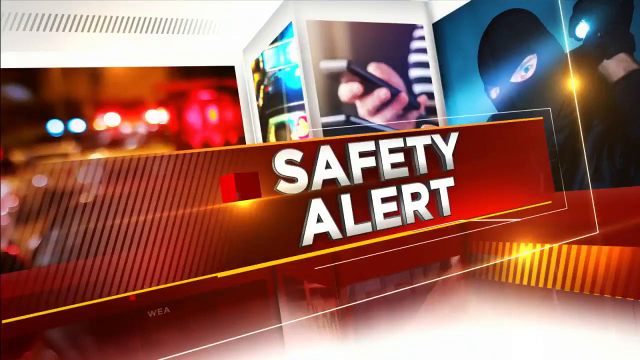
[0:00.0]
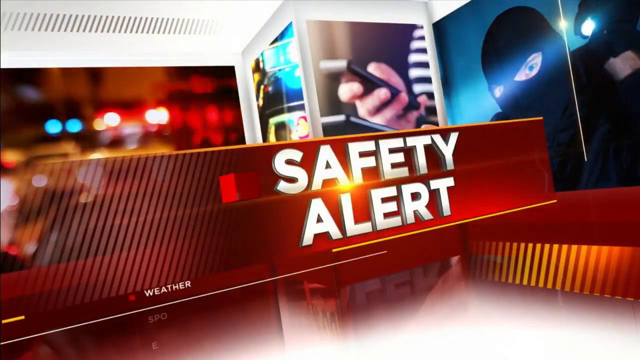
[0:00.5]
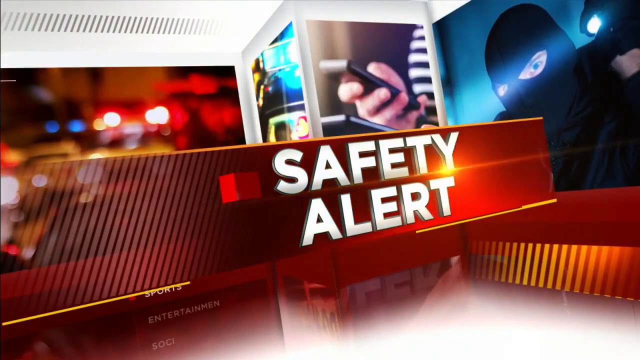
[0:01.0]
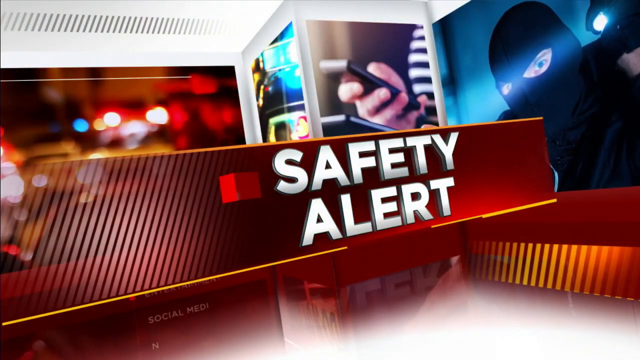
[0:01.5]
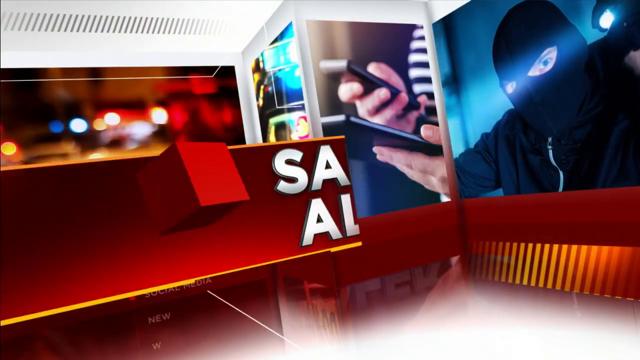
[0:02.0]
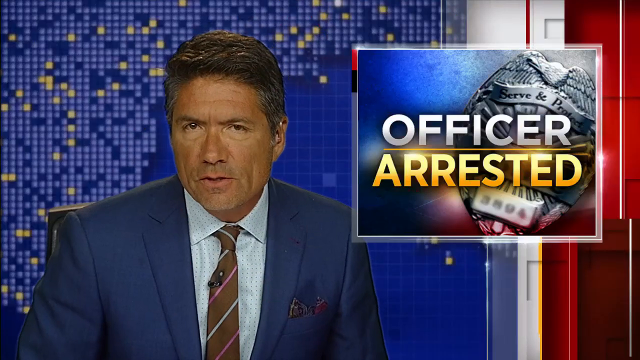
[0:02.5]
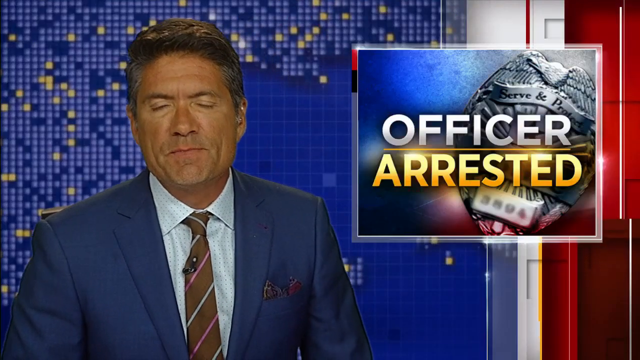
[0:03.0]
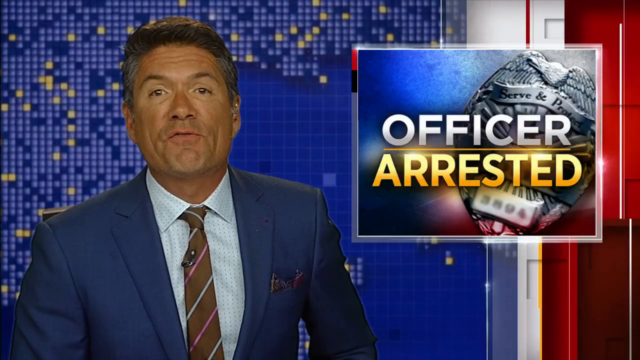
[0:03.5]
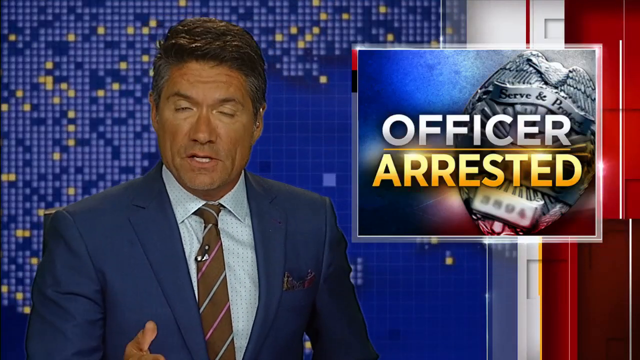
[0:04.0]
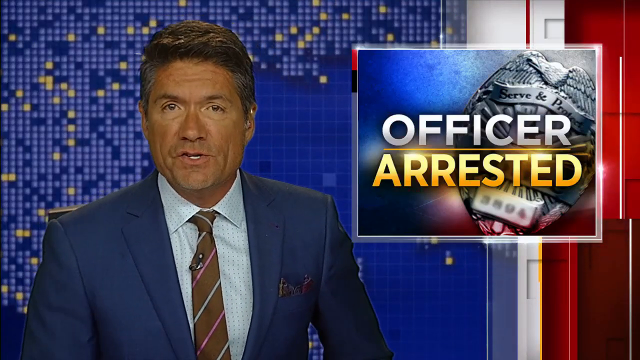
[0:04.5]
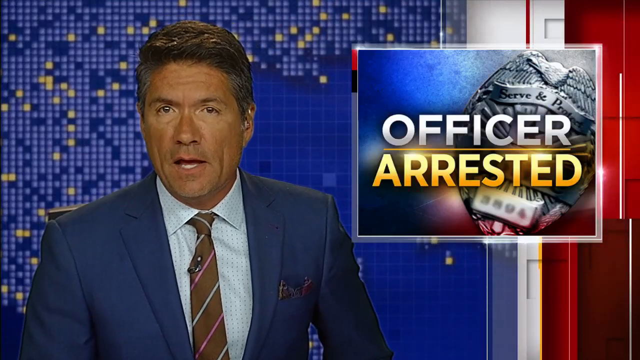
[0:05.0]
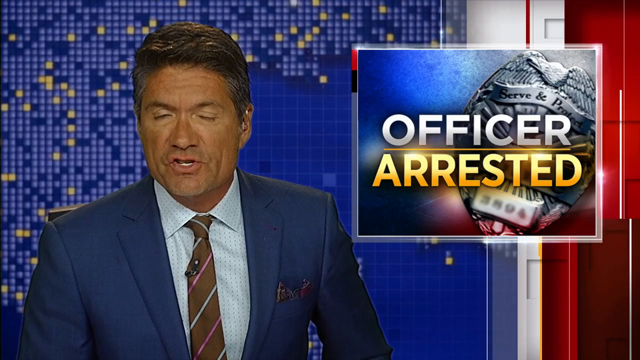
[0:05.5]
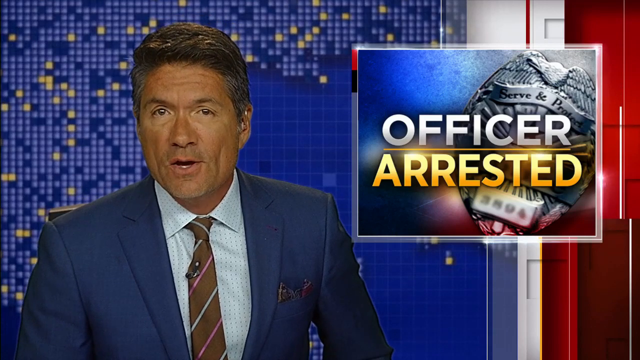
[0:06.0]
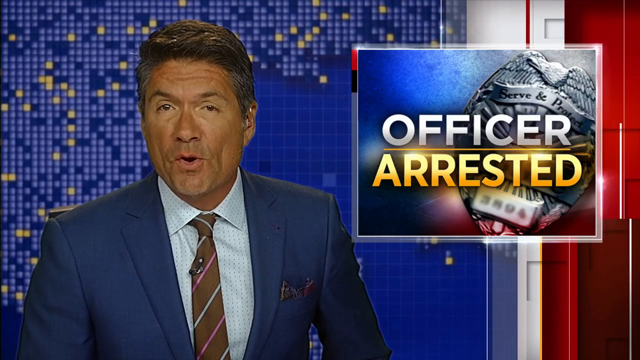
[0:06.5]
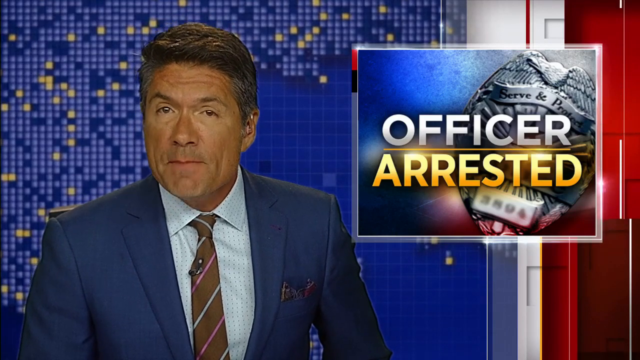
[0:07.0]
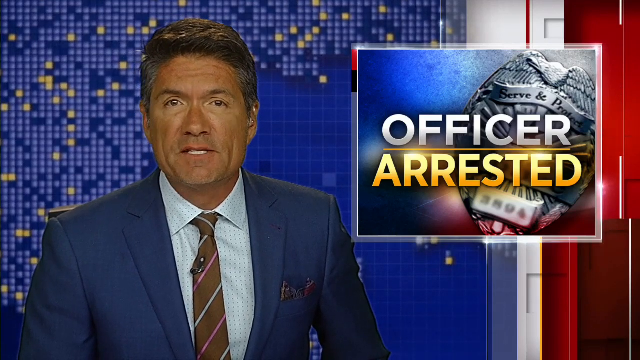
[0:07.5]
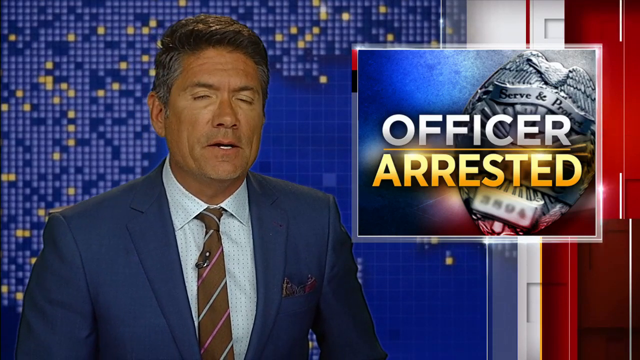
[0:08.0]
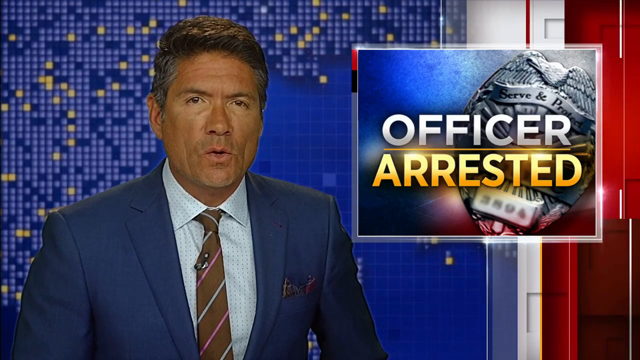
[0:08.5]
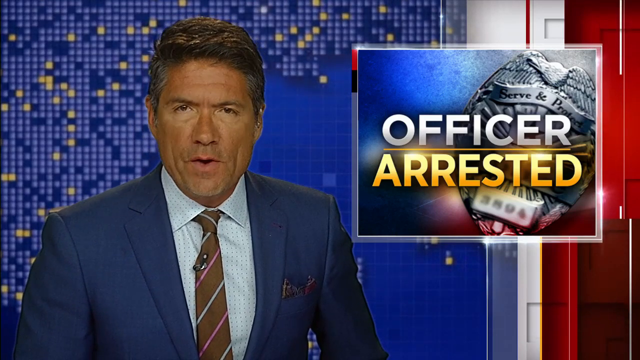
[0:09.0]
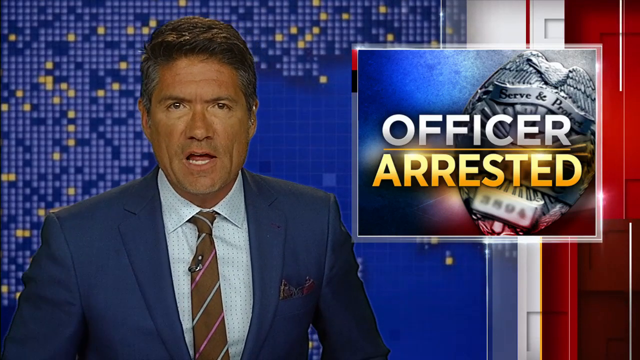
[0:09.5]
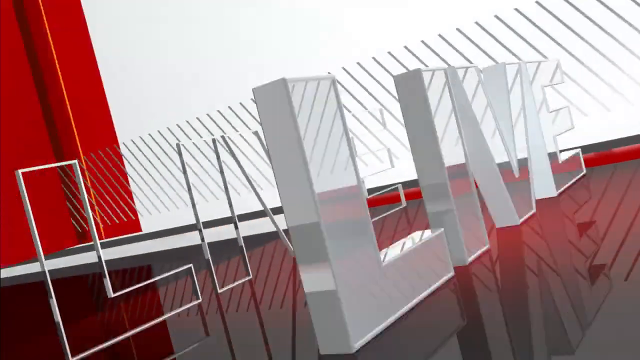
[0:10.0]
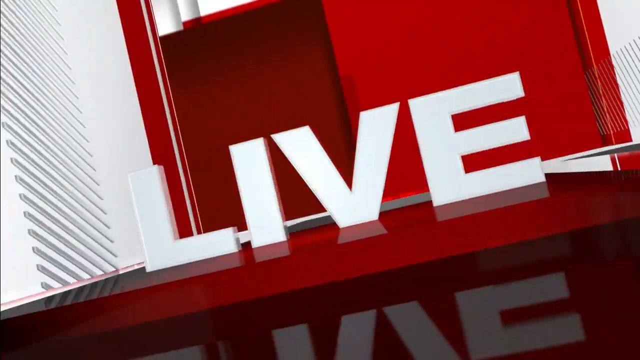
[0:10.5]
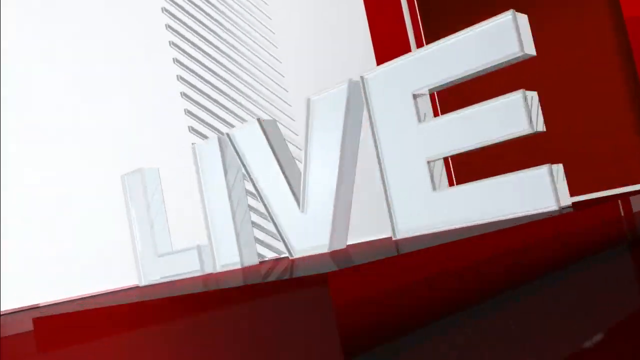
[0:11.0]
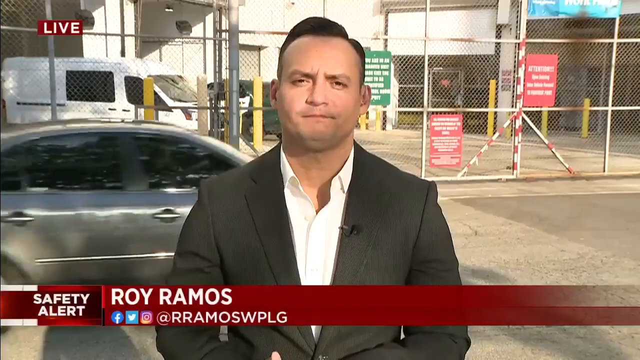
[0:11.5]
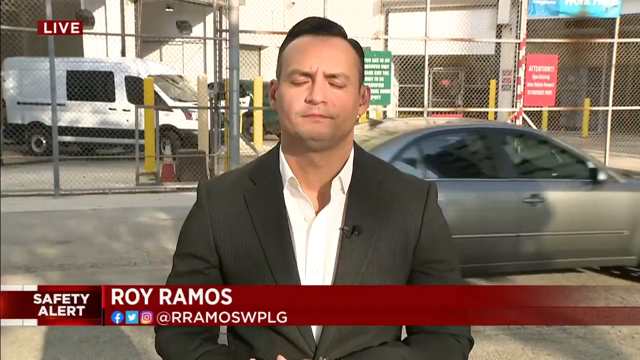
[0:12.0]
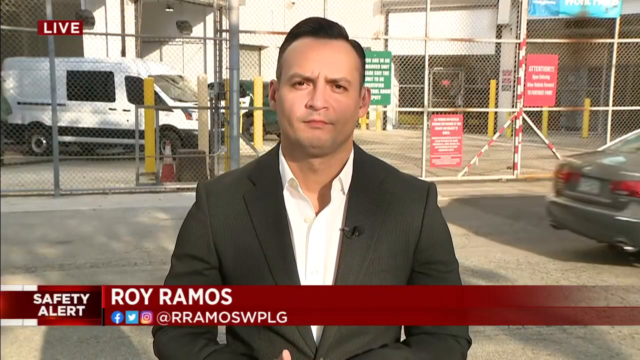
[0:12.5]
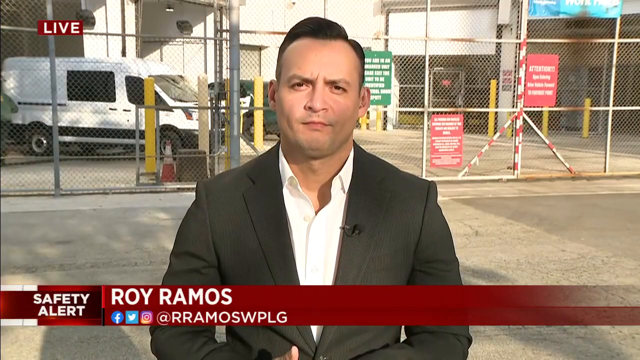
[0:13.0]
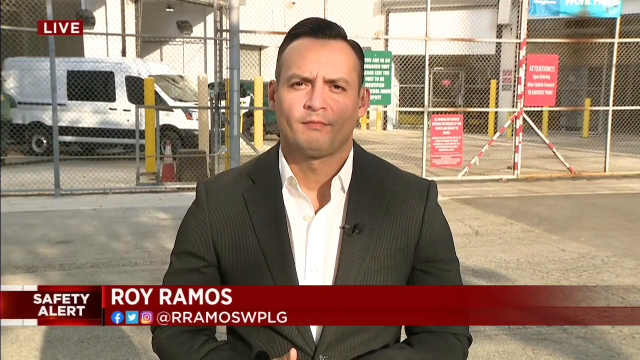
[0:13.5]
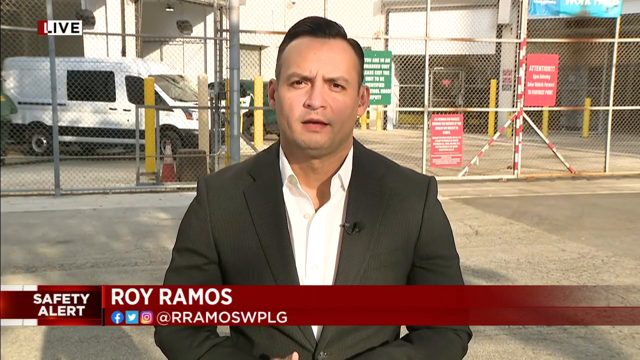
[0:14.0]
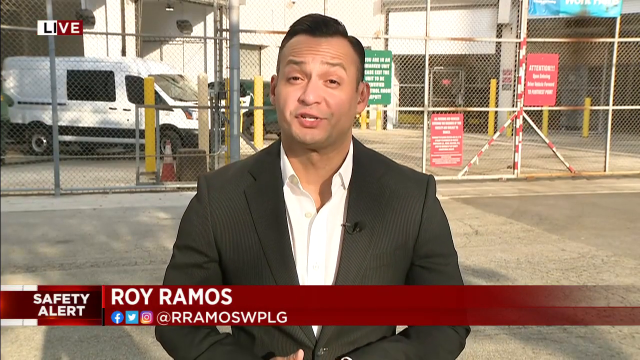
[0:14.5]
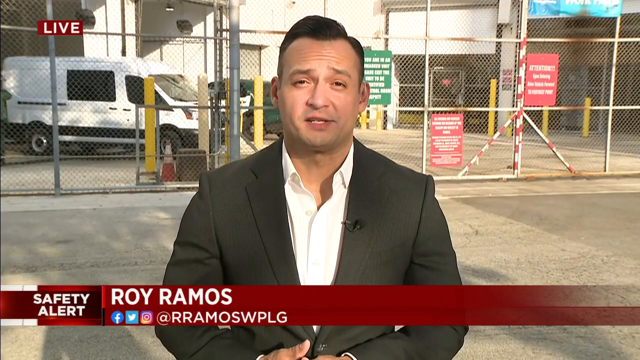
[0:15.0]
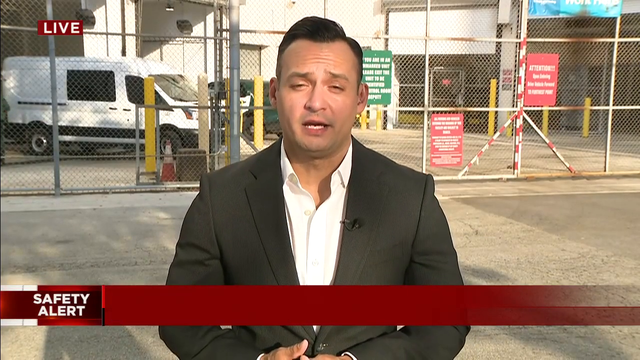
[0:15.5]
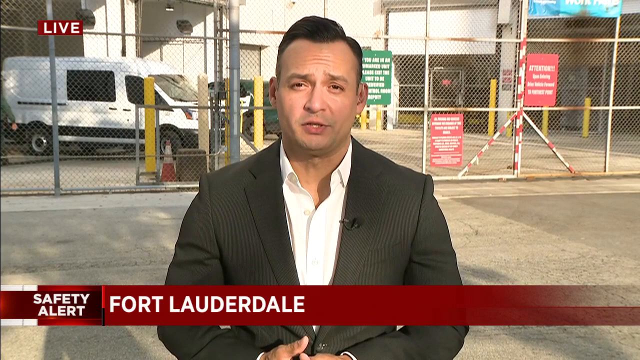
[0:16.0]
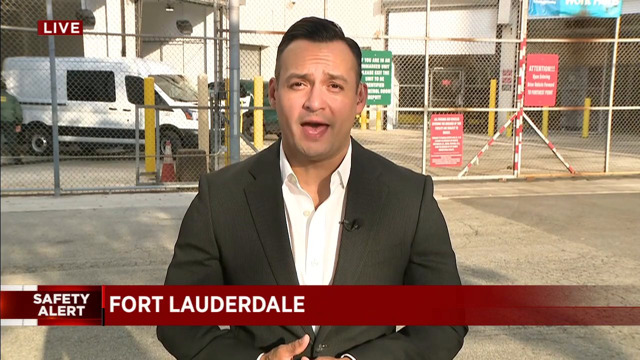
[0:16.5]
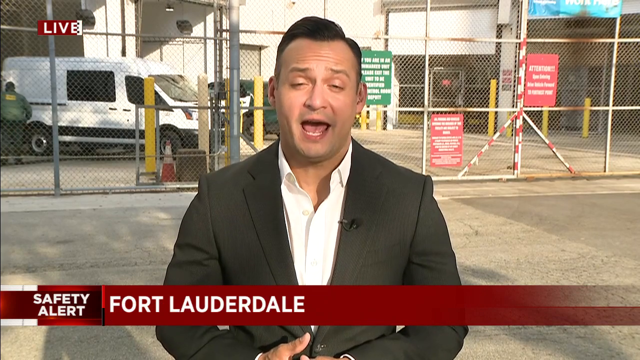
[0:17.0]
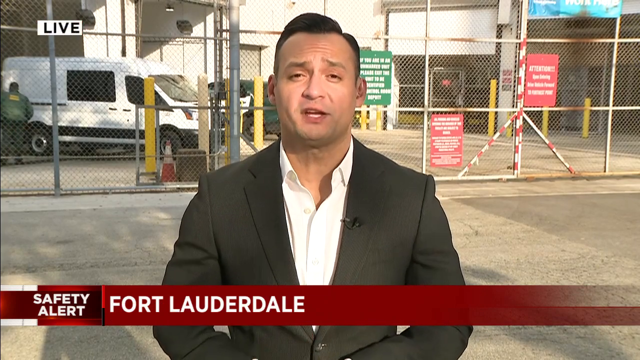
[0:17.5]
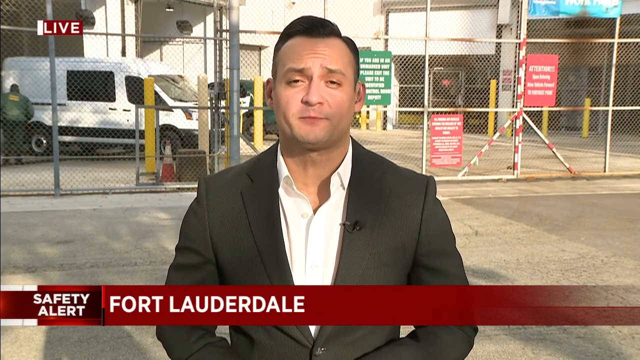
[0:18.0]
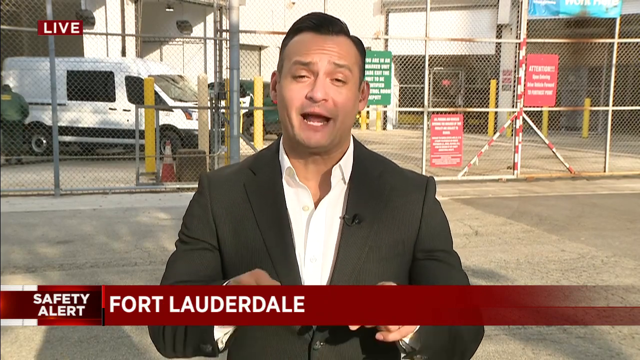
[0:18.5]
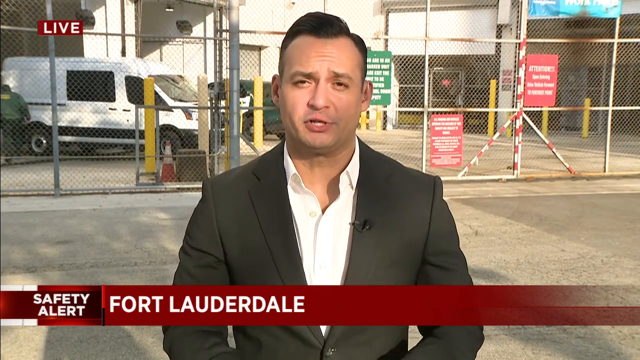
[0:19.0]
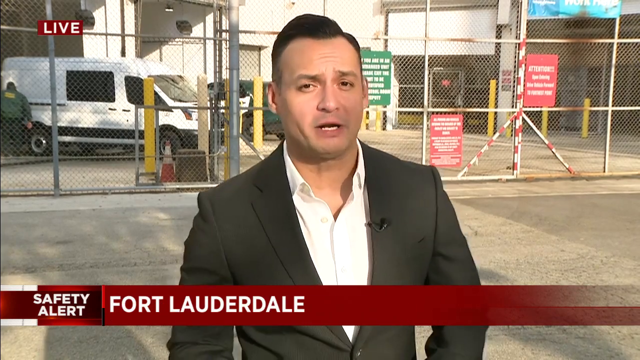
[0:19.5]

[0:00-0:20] A safety alert news story from Fort Lauderdale is covered by Roy Ramos on the ground: a member of the Fort Lauderdale police has been arrested.